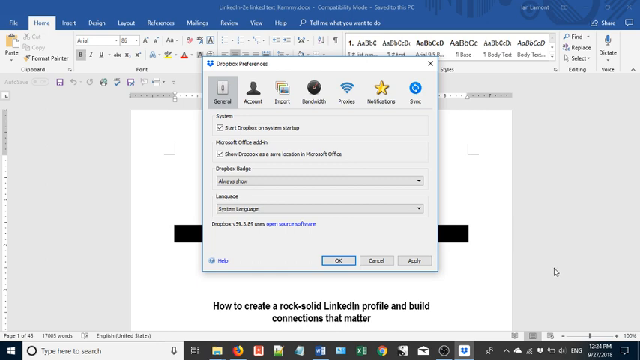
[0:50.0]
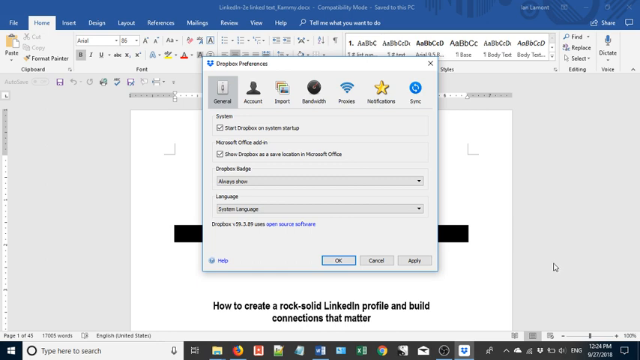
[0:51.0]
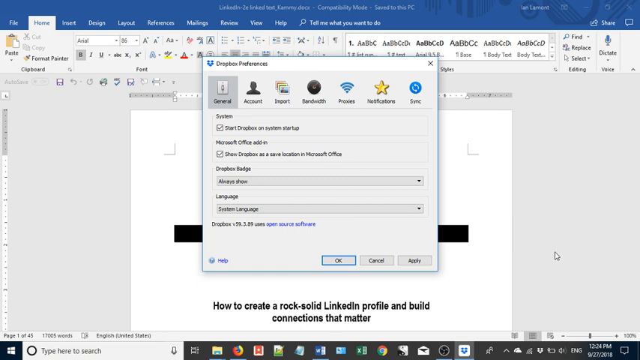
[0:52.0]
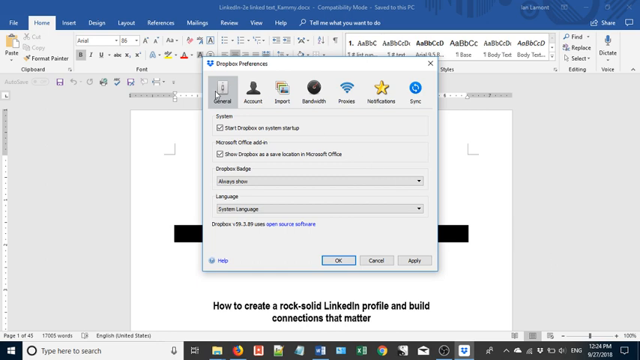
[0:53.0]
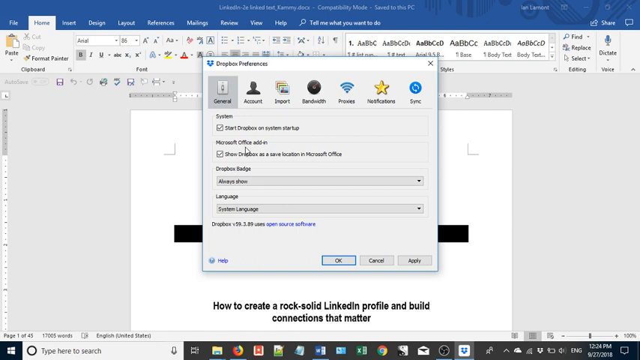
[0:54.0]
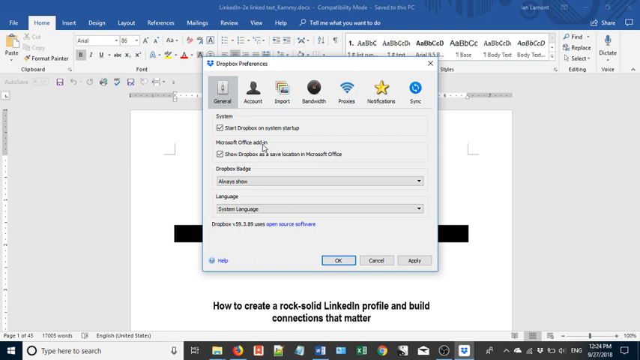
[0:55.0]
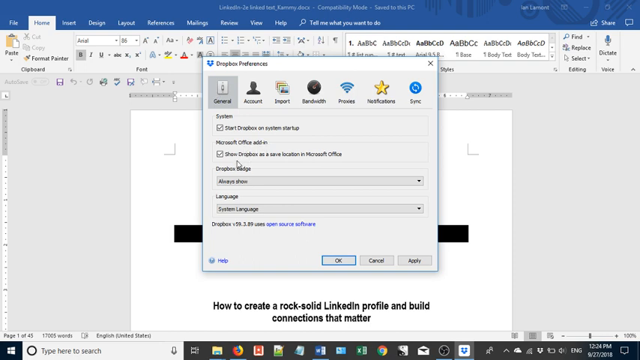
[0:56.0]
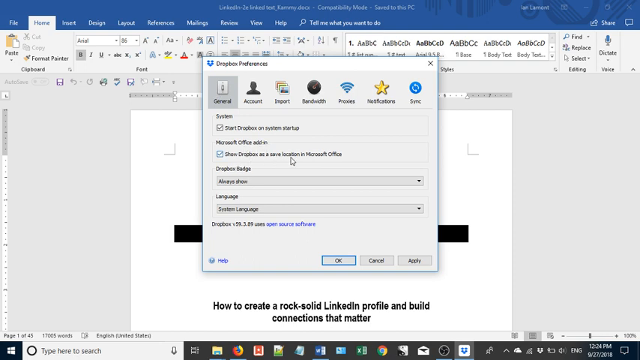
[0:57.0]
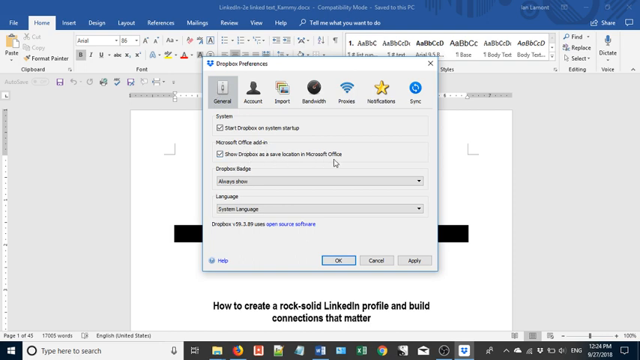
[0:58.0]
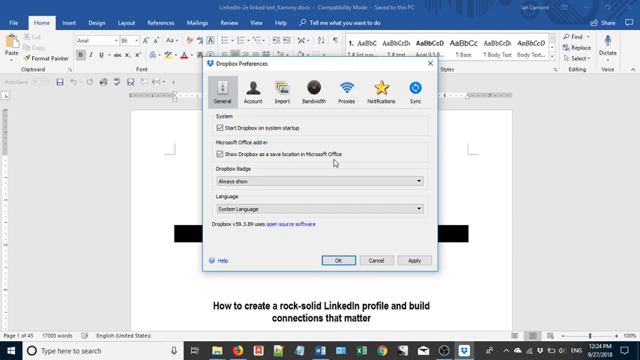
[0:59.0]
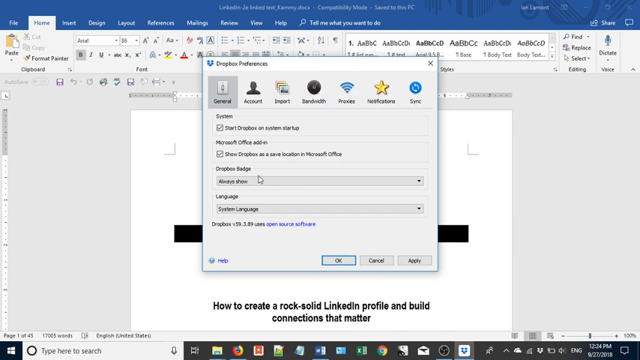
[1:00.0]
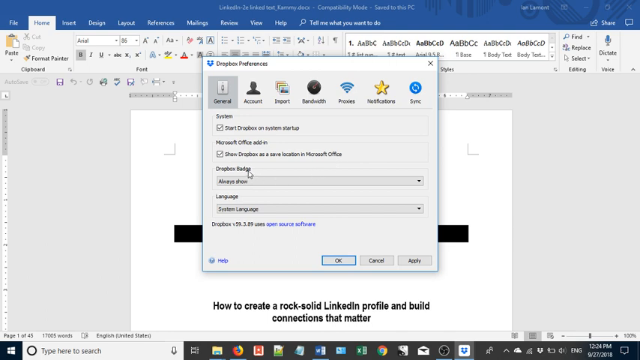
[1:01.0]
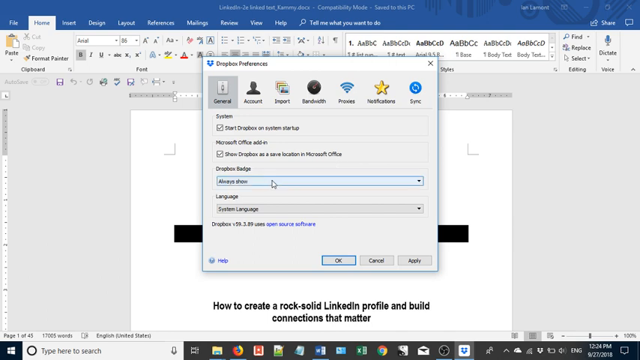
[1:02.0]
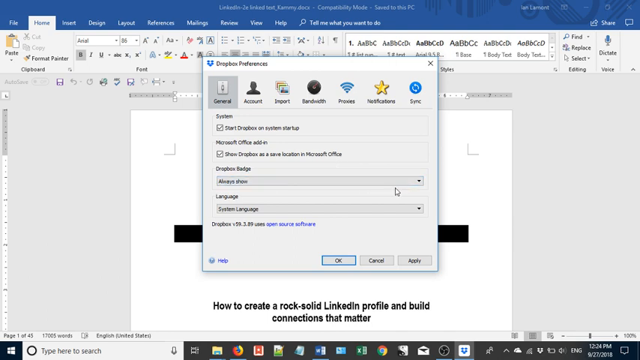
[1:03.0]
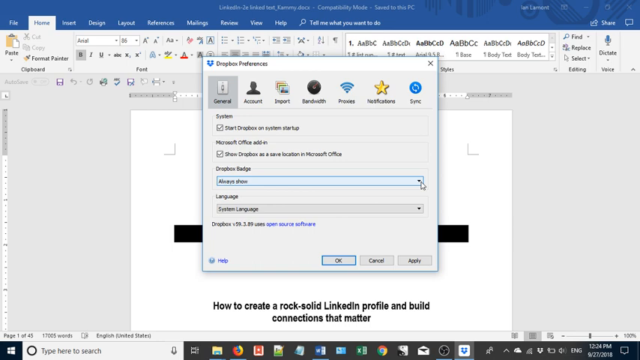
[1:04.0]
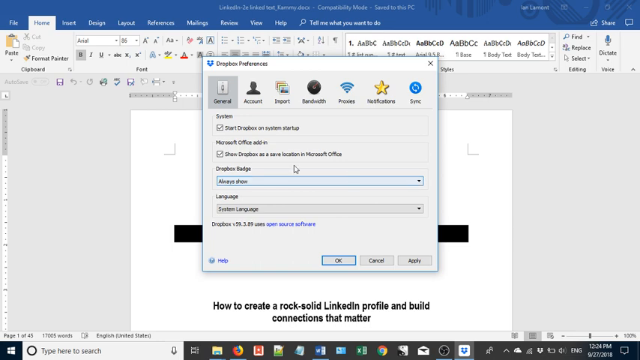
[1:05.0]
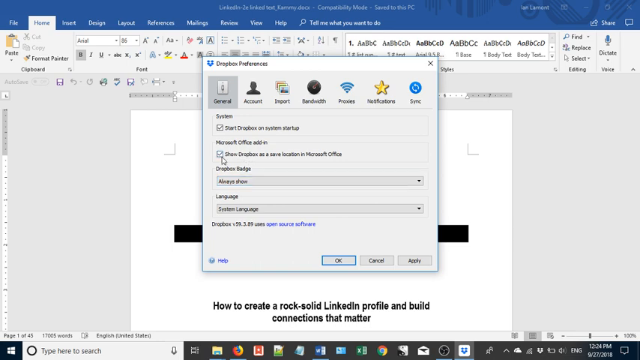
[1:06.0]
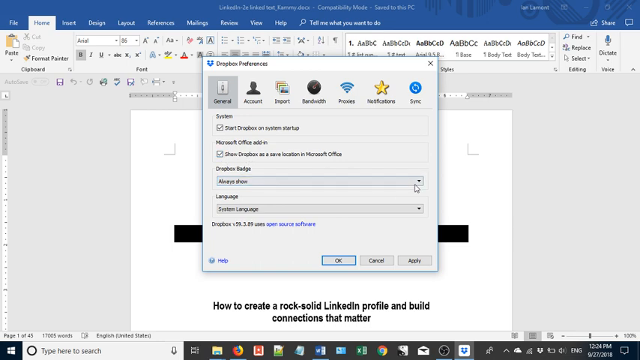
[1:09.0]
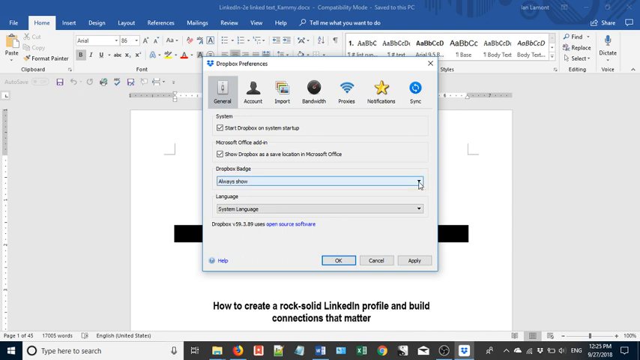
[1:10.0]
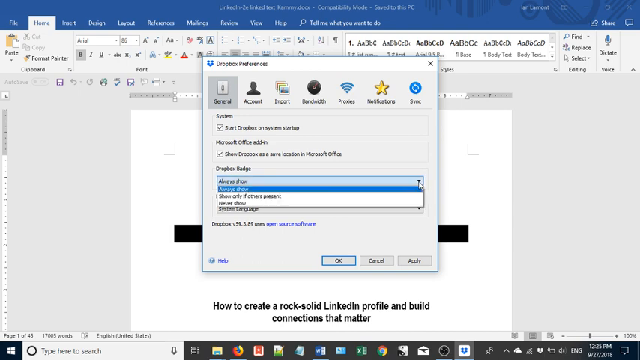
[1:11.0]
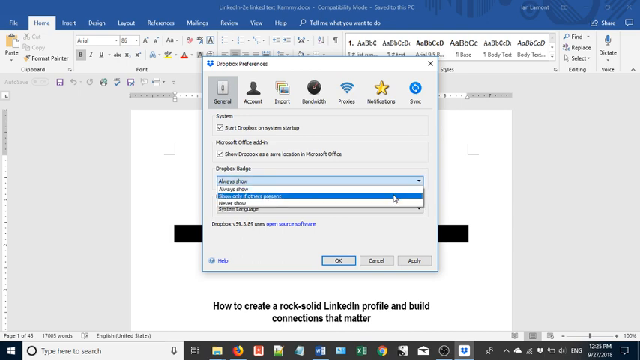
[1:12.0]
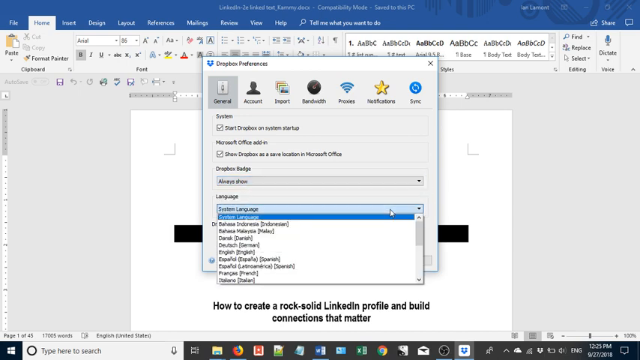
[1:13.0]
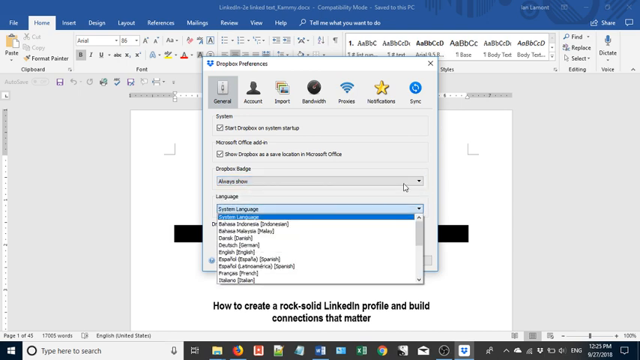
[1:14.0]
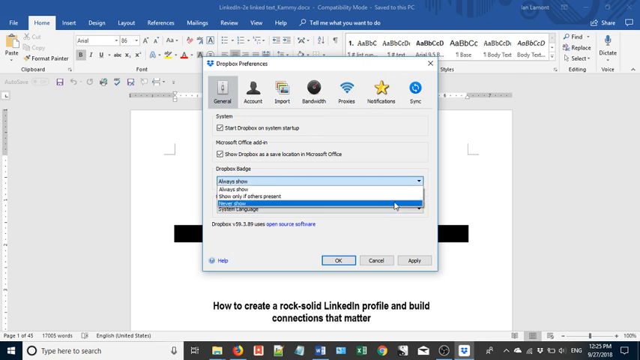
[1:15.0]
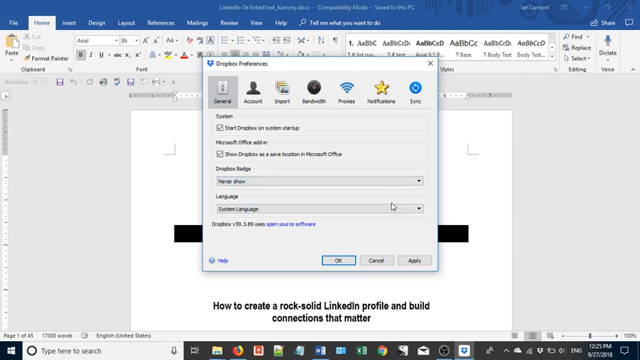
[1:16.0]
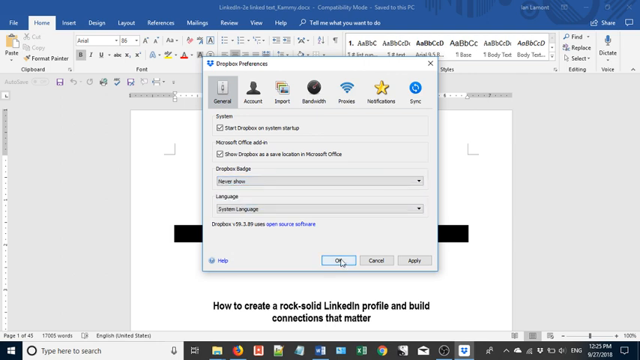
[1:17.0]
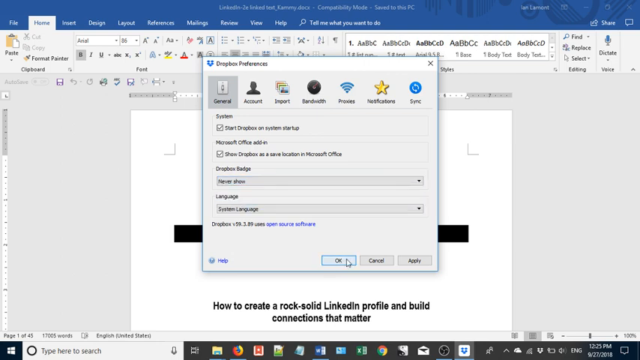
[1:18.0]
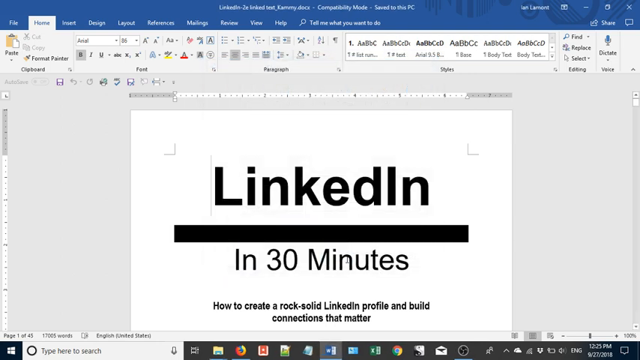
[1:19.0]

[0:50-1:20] The page about how to design a LinkedIn profile and build connections that matter is still shown, and in front of it is a Dropbox Preferences box. Below the title are tabs from left to right: "General" on the far left, then "Account" with an icon of a person over it, "Import" with pictures above it, "Bandwidth" with a sphere above it, "Proxies" with signals going out, "Notifications" with a gold star over it, and "Sync" with a blue sphere with arrows on it. Beneath that is "System," with a check in "Start Dropbox on System." Below are "Microsoft Office add-in" with "Show Dropbox as a Saved Location in Microsoft Office," then "Dropbox Badge" with "Always Show," and "Language" with "System Language." At the bottom are an OK button, a Cancel button, and an Apply button.